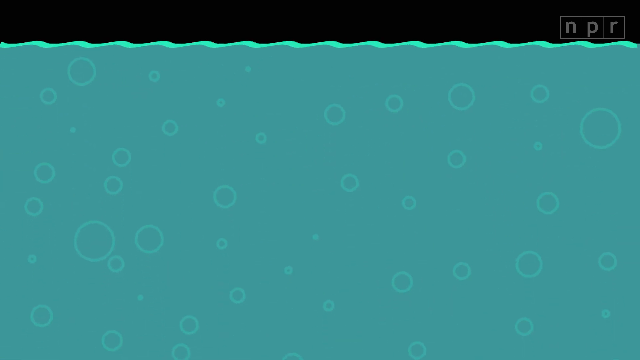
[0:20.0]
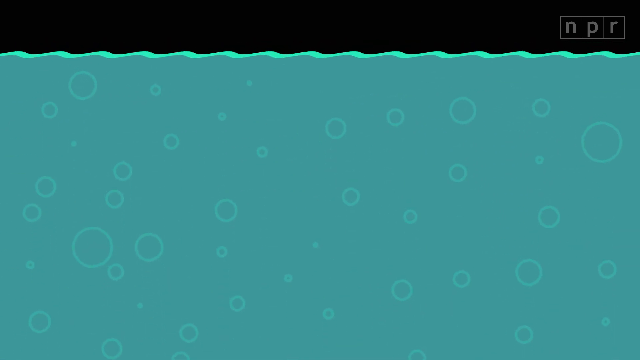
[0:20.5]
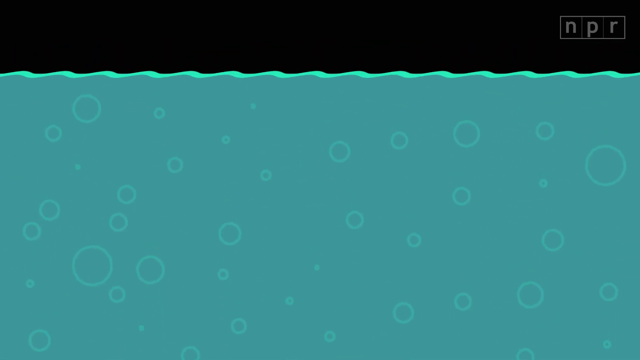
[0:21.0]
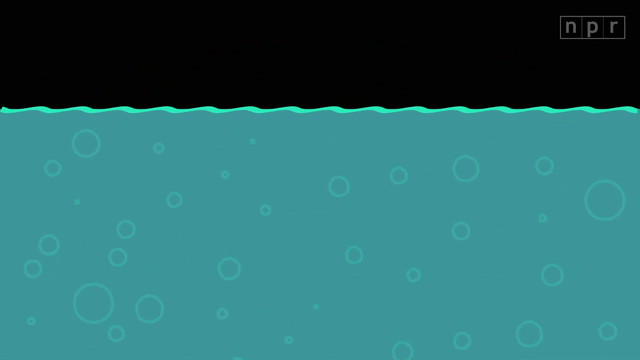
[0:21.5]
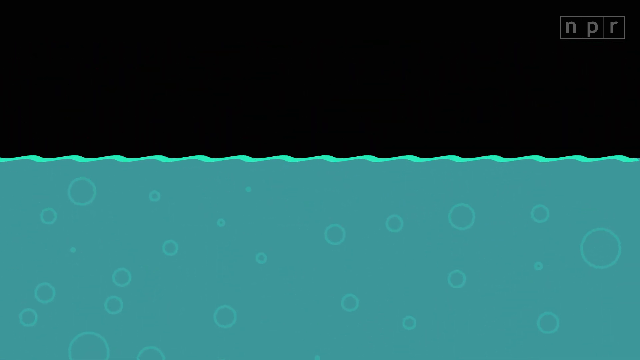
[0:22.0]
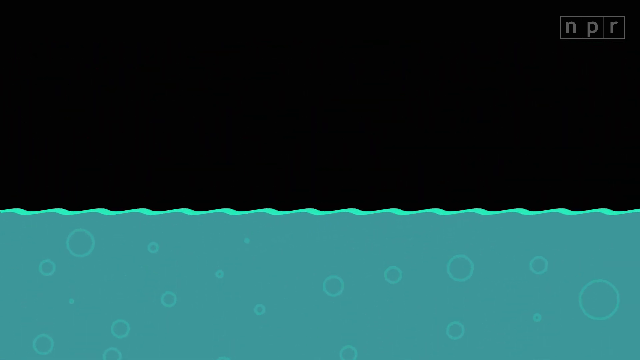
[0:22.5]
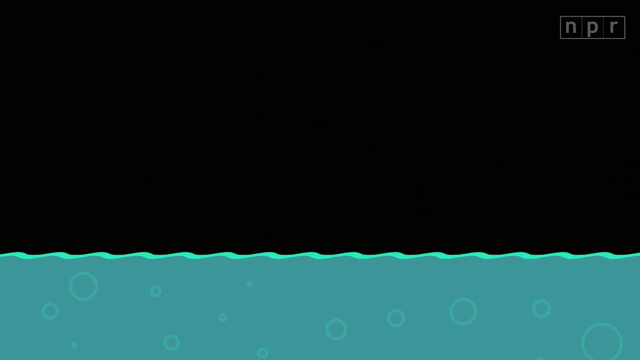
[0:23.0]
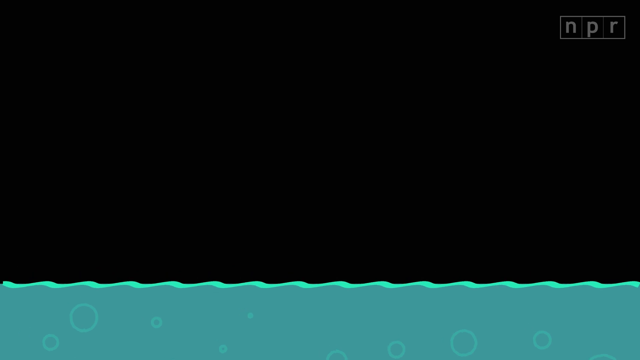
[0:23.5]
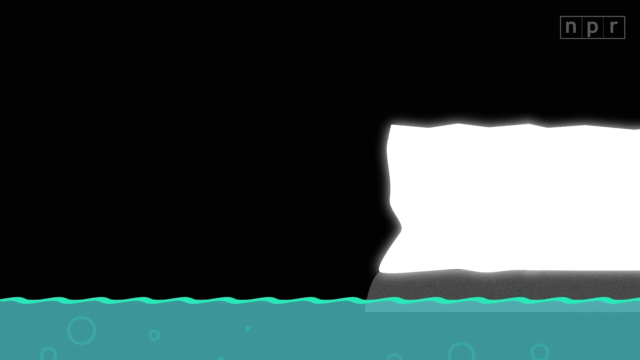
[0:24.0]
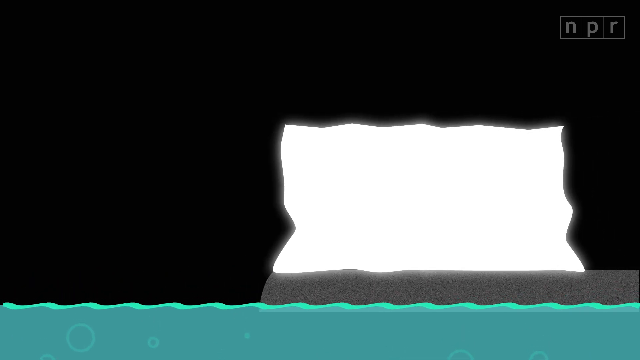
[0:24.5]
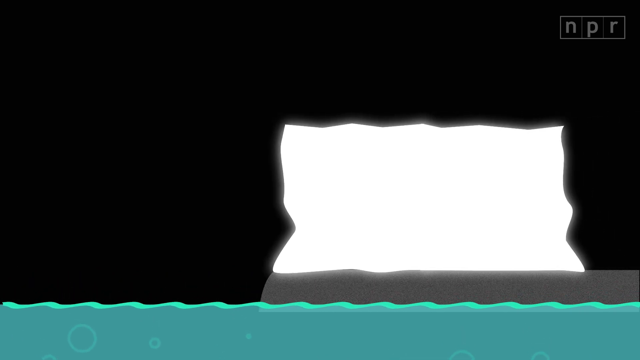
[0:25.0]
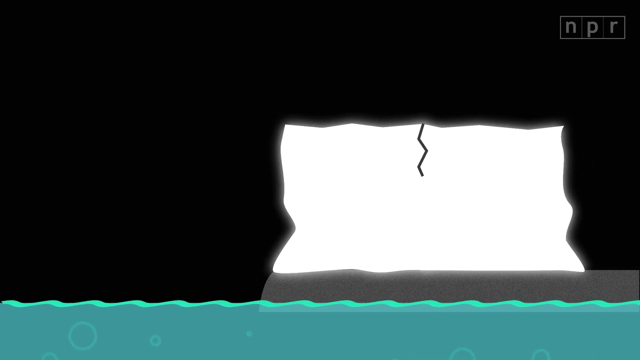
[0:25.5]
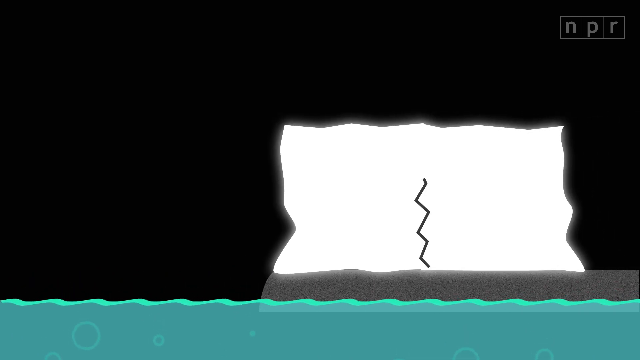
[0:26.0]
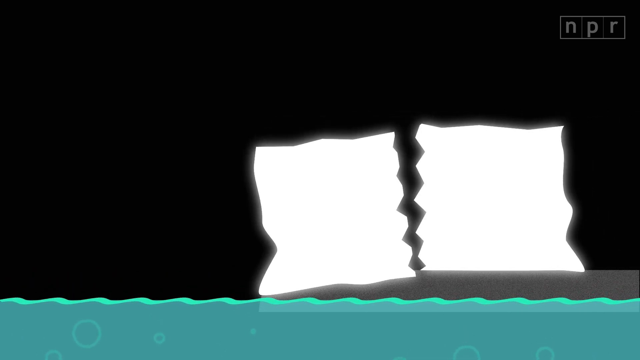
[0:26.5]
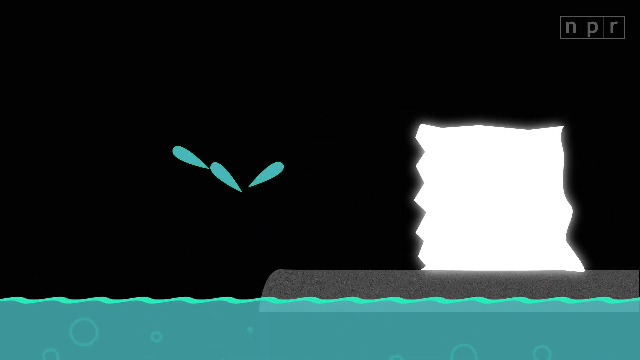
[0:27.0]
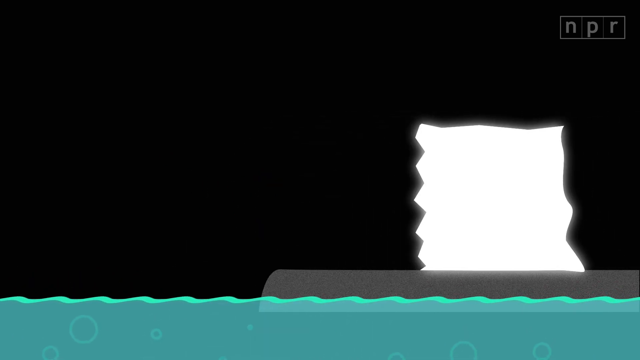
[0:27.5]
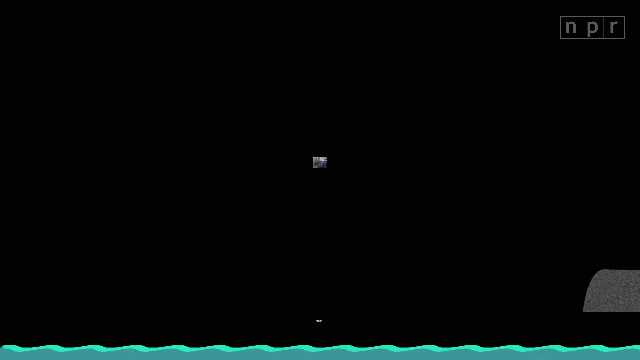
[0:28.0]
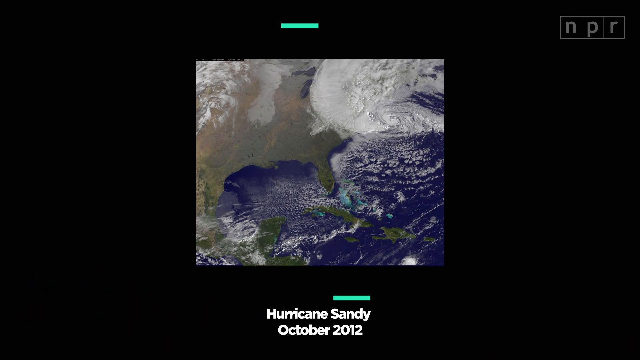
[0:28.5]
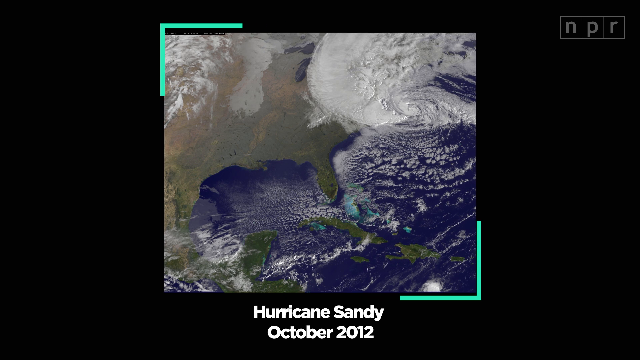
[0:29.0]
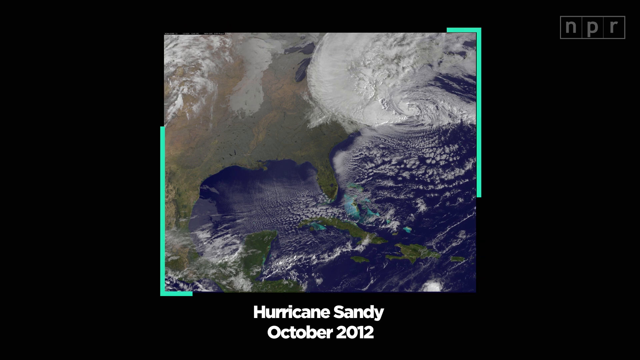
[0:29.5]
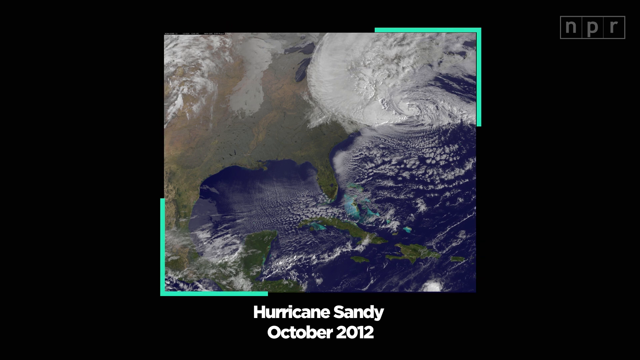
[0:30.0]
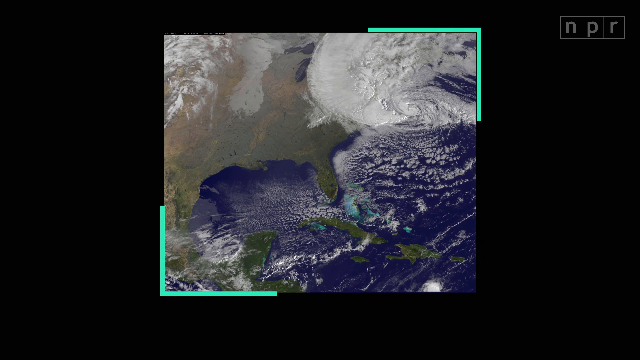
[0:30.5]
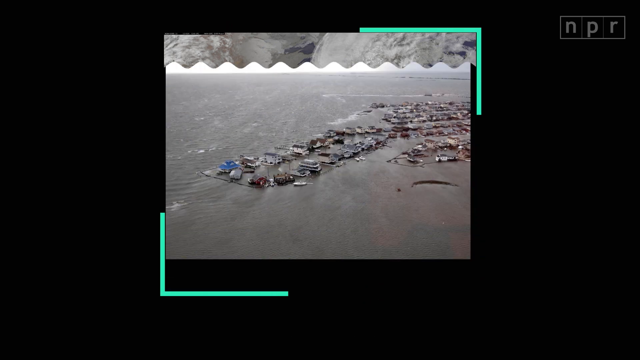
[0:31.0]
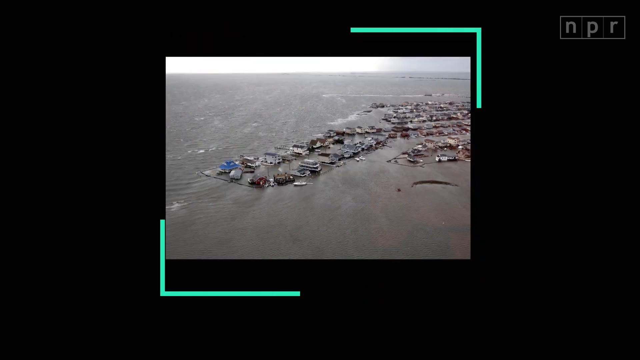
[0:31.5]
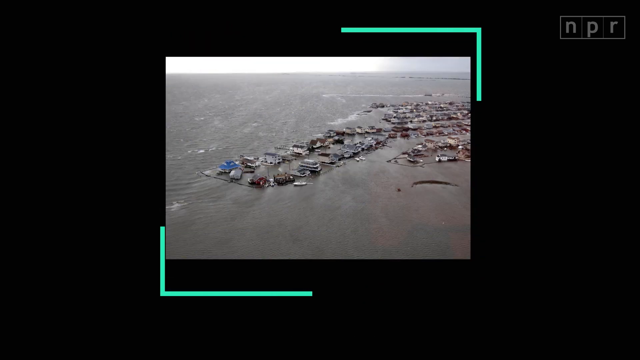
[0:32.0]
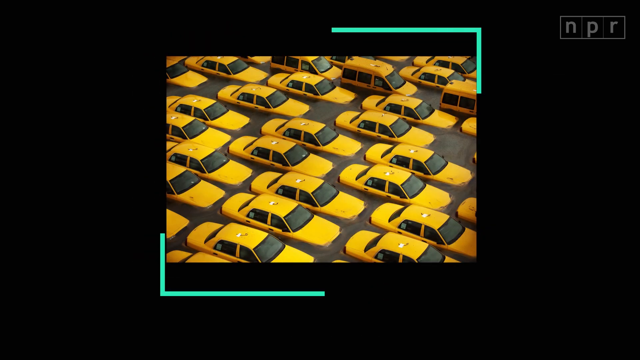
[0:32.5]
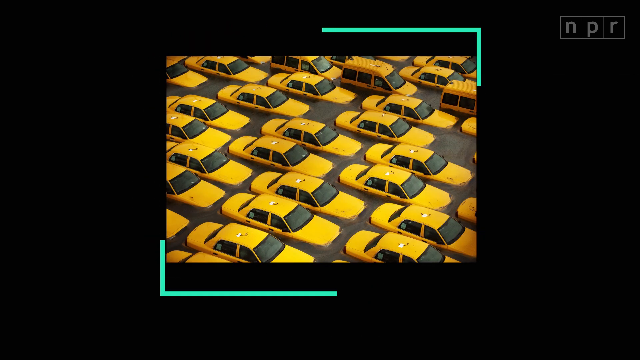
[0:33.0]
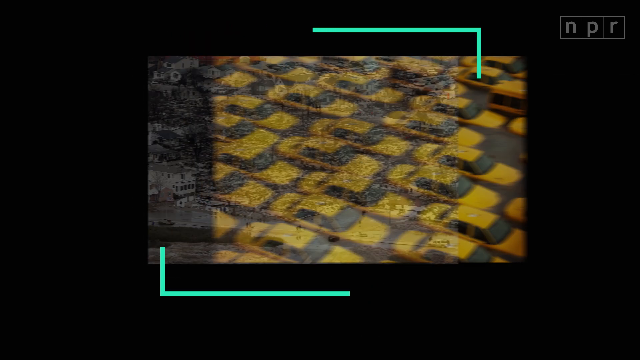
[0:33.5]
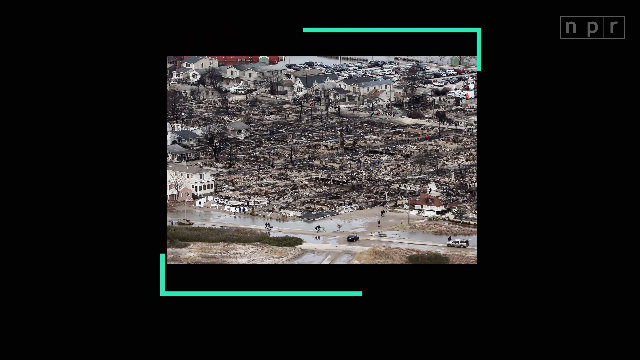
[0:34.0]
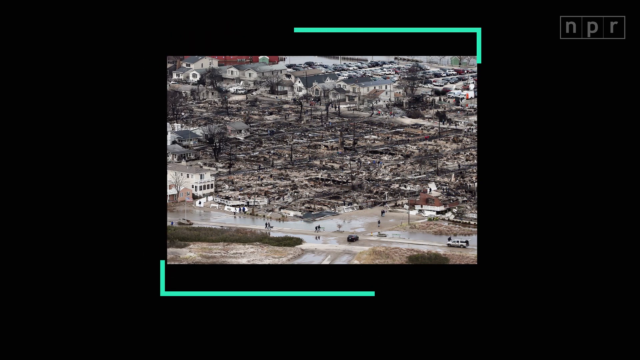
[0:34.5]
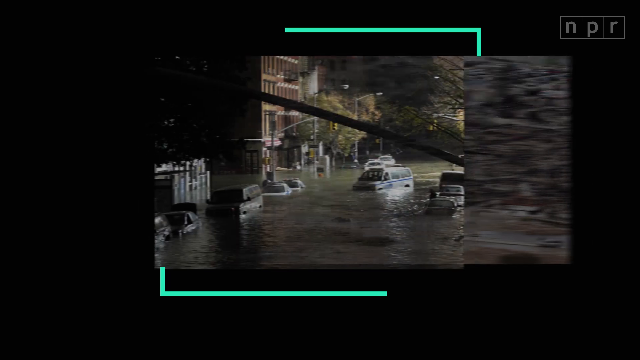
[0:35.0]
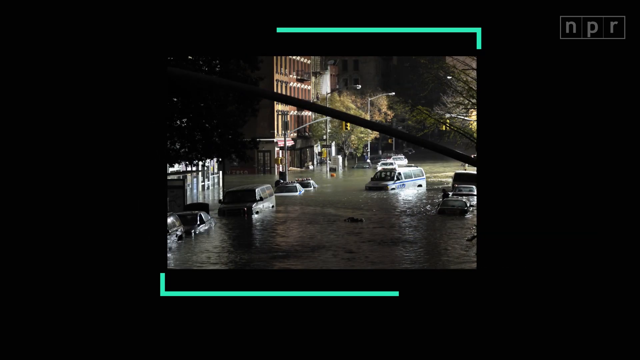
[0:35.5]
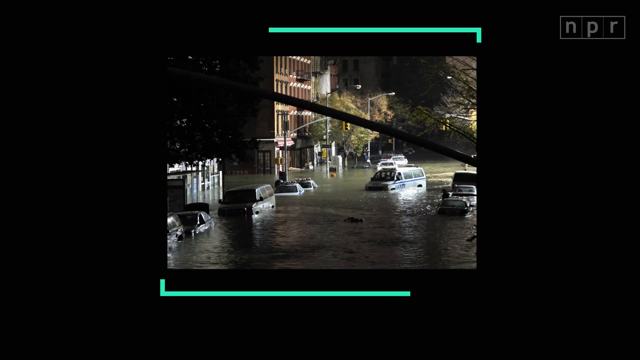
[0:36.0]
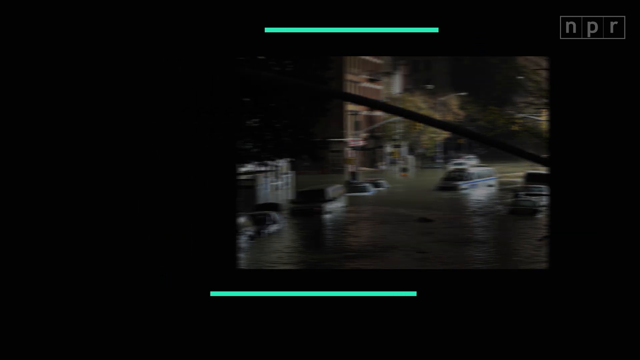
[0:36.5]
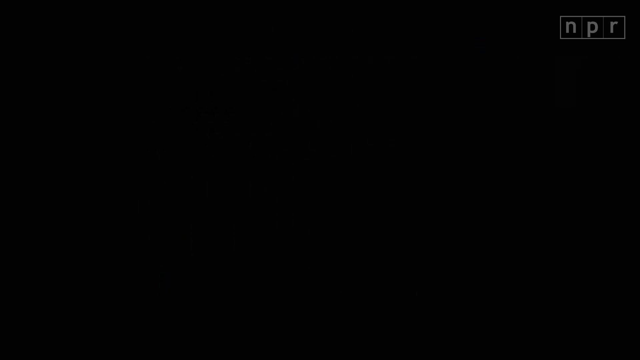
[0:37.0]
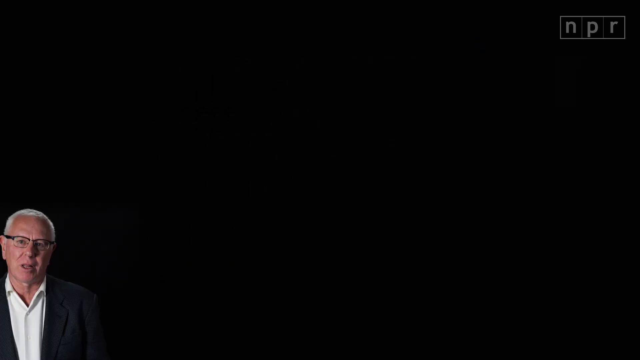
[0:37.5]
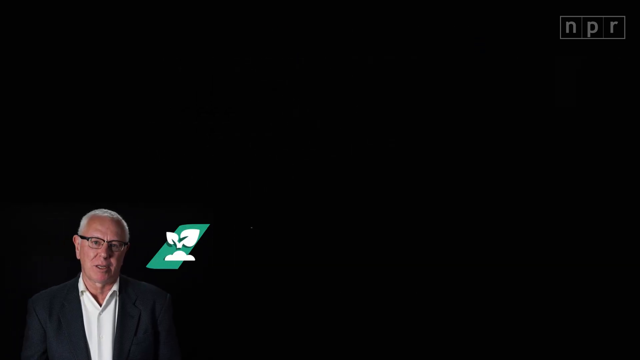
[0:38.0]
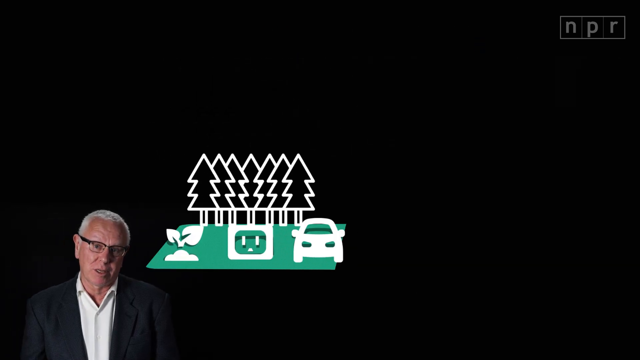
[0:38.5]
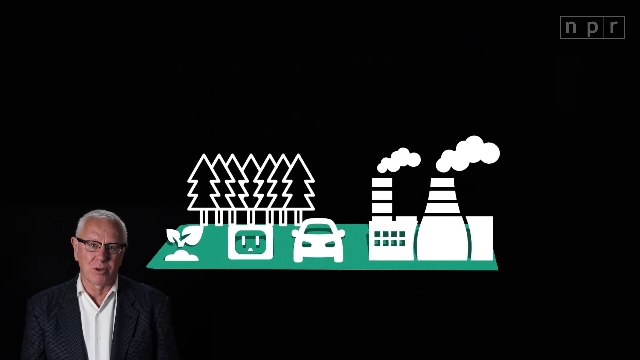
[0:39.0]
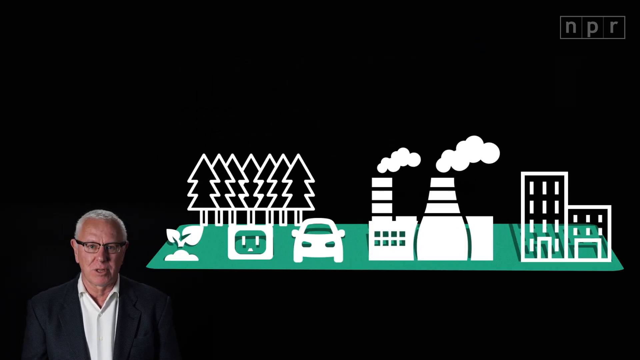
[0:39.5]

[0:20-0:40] Blue that looks like water covers most of the screen, with bubbles in the background, and the water looks as if it is kind of being drained away. A white rectangle pops up, split down the middle, and half of it pours into the water. Text reads "Hurricane Sandy," and a map shows where it was hitting the United States. Destruction follows: a taxi parking area that is totally flooded, and aerial shots looking down at how much water was left. The man seen earlier is then shrunk down and placed in the lower left-hand corner, and cartoon-like pictures pop up showing trees in the background, plants growing, TVs, cars, factories and buildings.